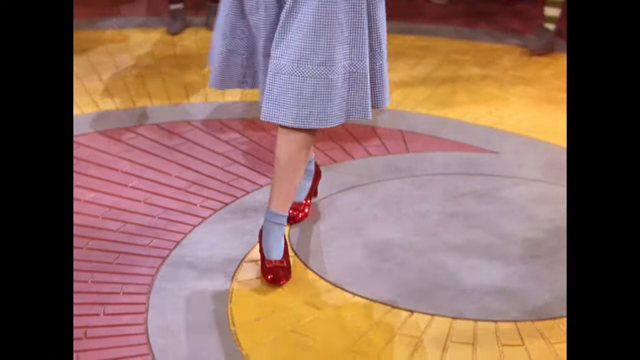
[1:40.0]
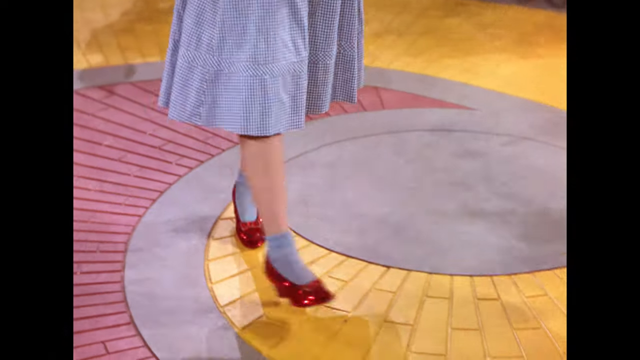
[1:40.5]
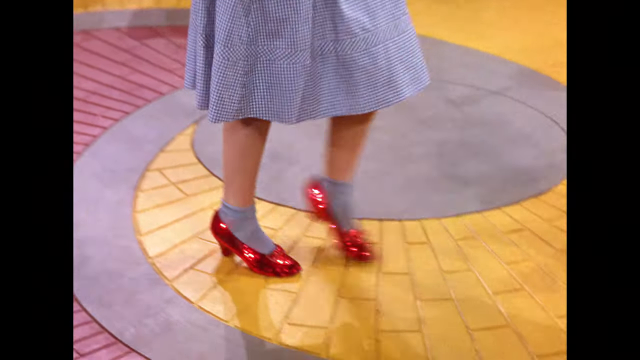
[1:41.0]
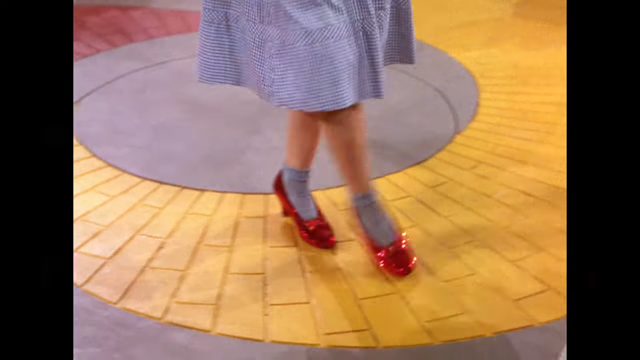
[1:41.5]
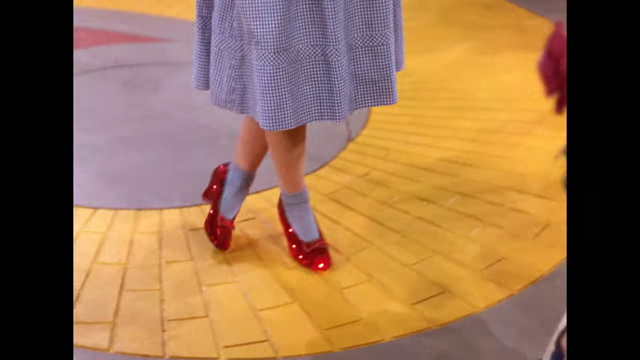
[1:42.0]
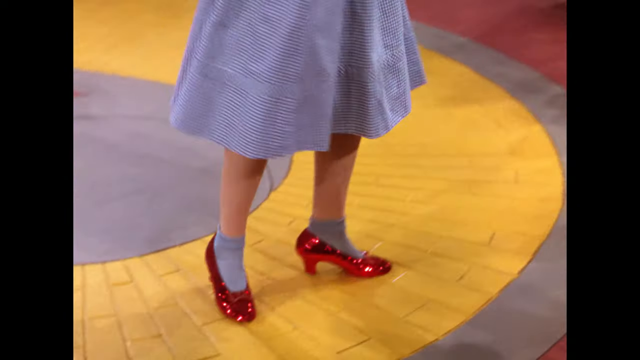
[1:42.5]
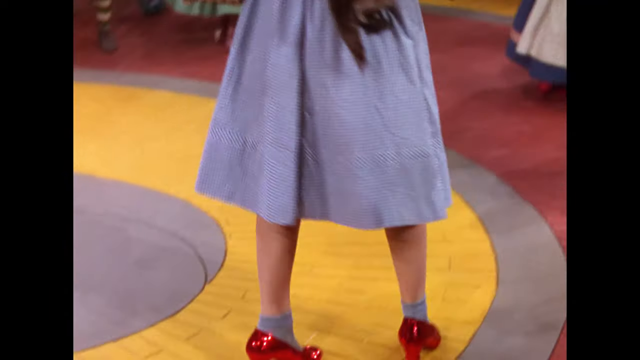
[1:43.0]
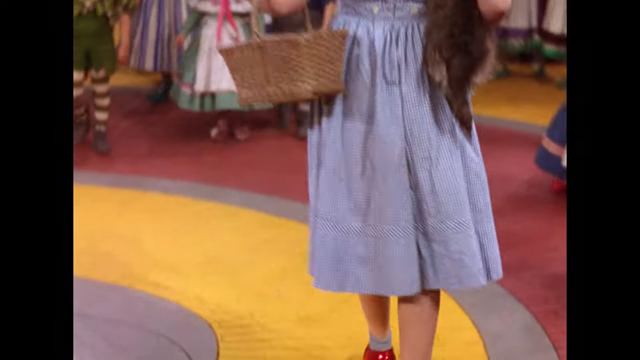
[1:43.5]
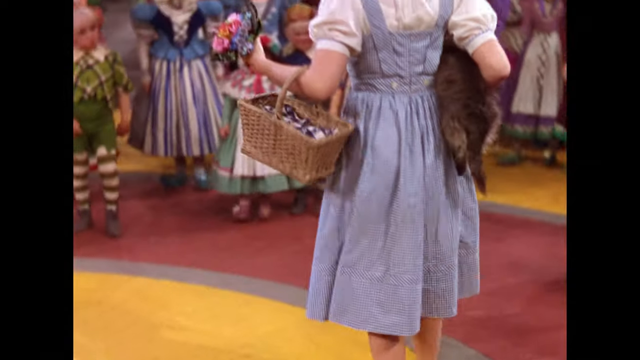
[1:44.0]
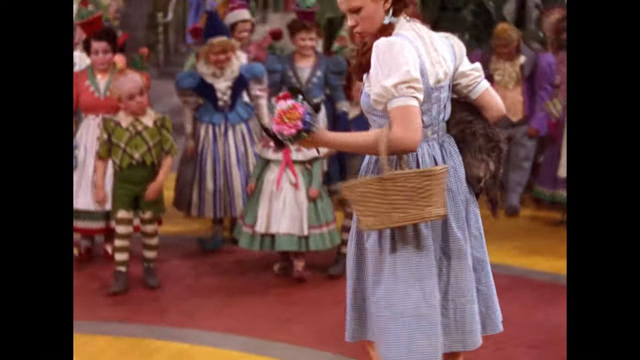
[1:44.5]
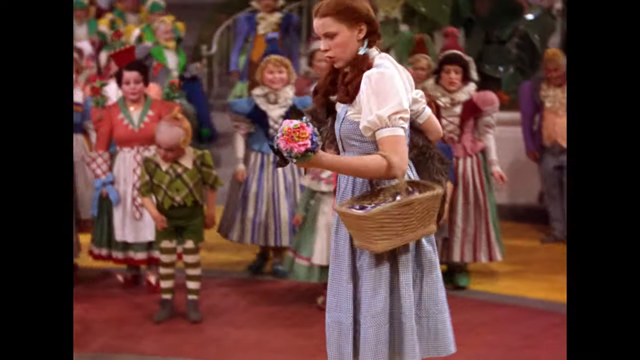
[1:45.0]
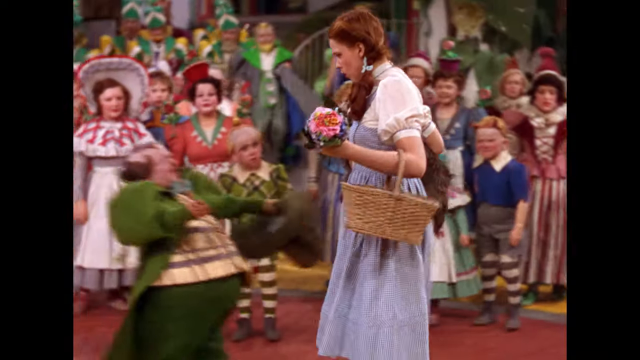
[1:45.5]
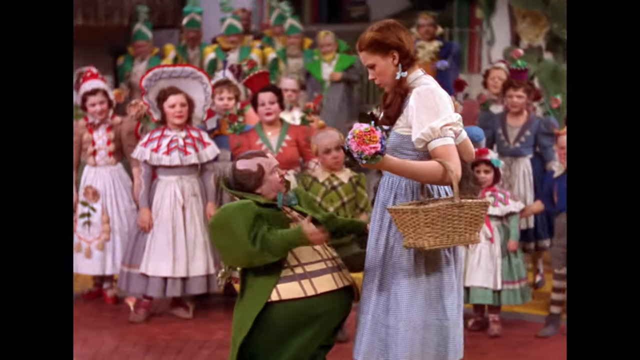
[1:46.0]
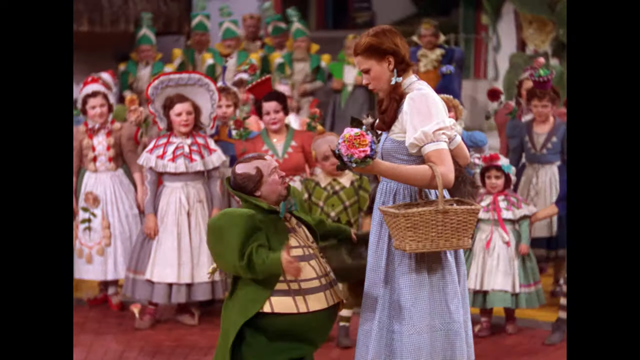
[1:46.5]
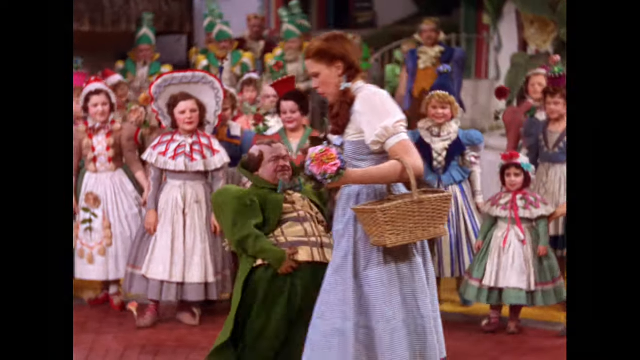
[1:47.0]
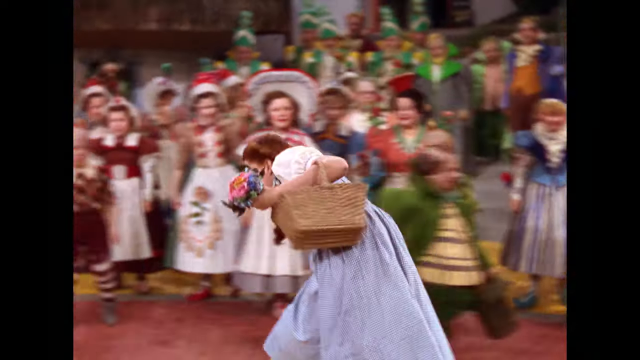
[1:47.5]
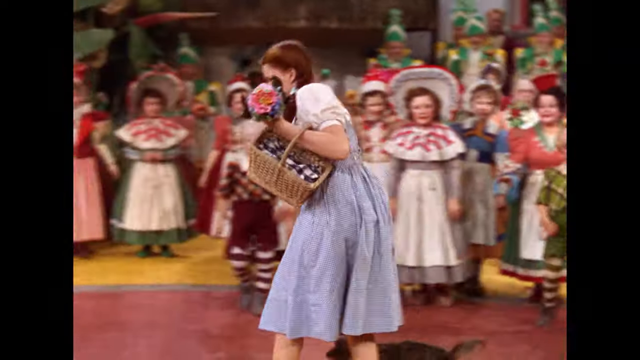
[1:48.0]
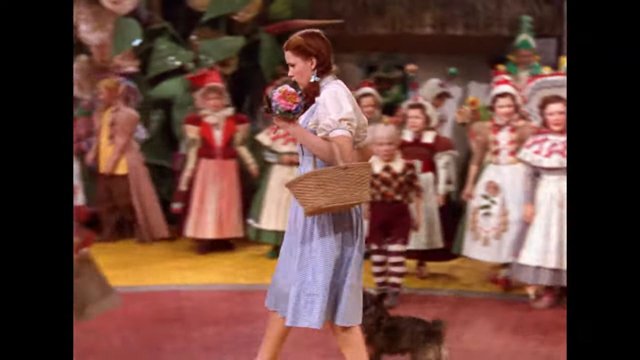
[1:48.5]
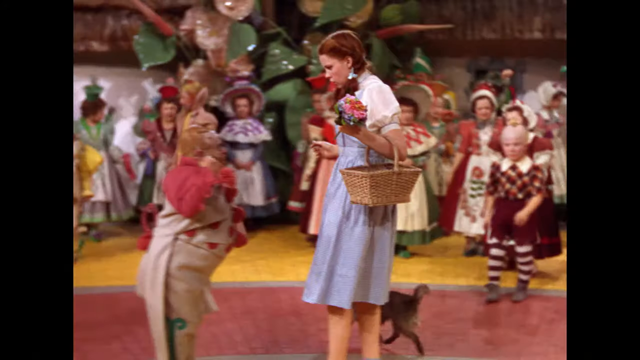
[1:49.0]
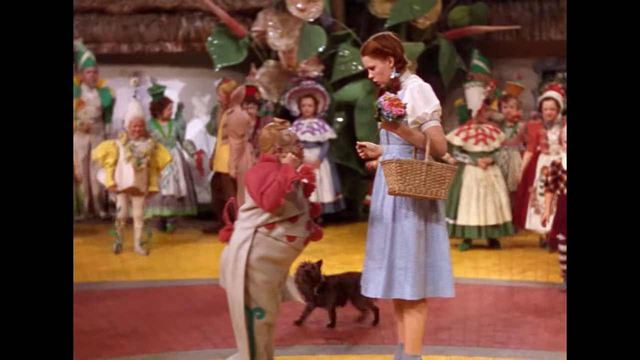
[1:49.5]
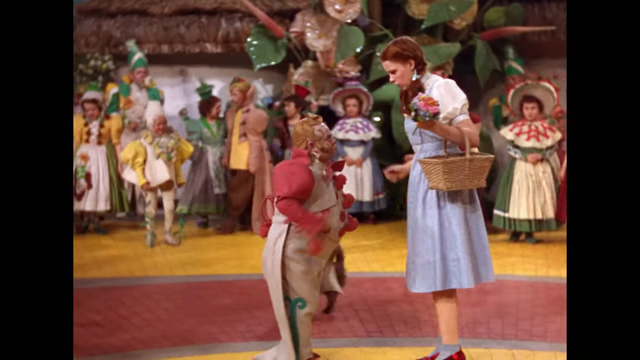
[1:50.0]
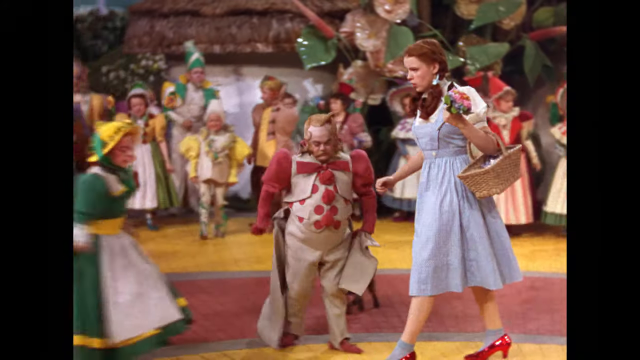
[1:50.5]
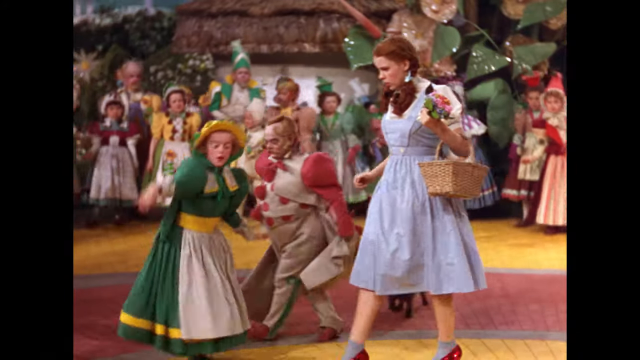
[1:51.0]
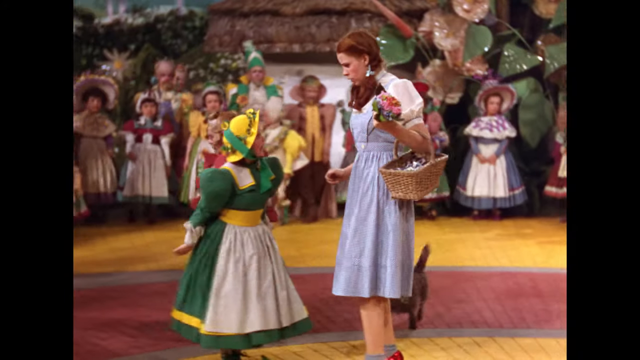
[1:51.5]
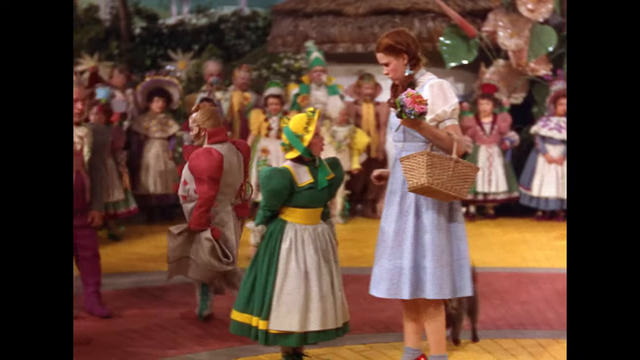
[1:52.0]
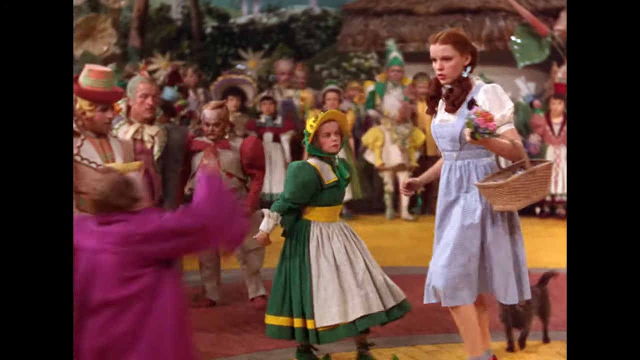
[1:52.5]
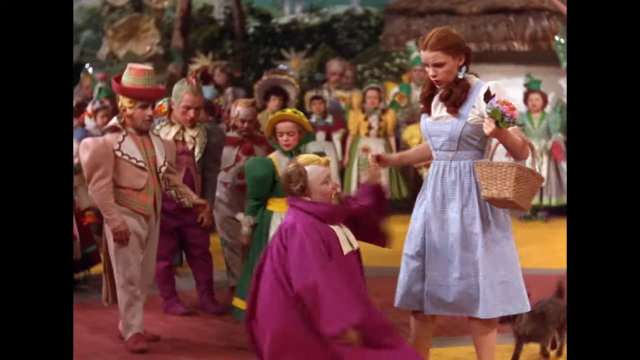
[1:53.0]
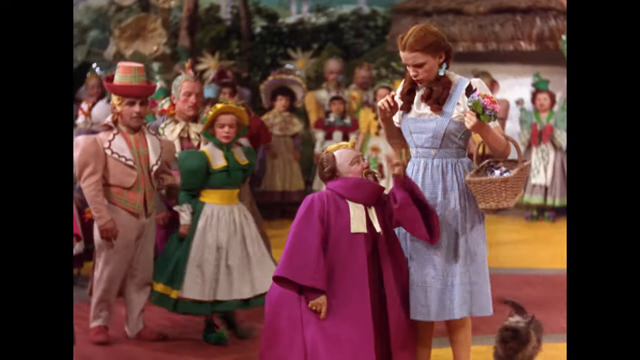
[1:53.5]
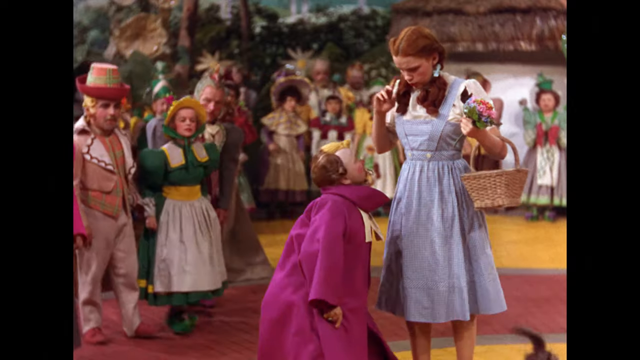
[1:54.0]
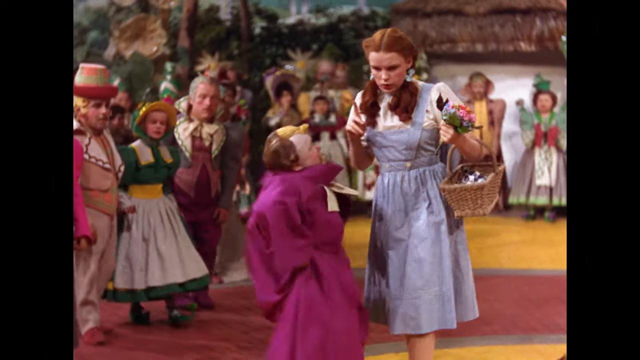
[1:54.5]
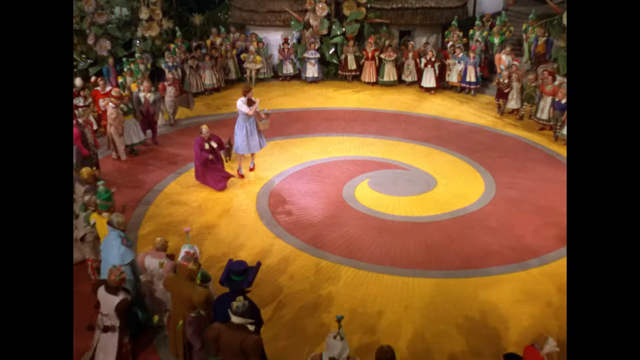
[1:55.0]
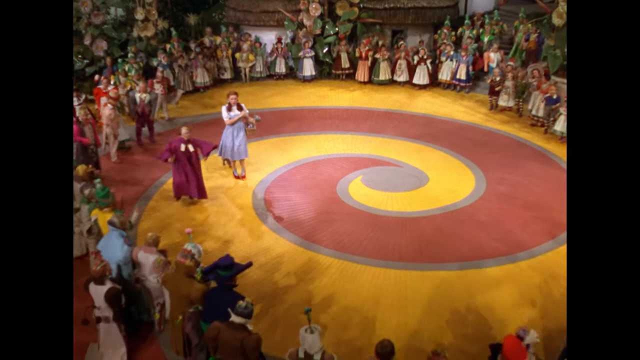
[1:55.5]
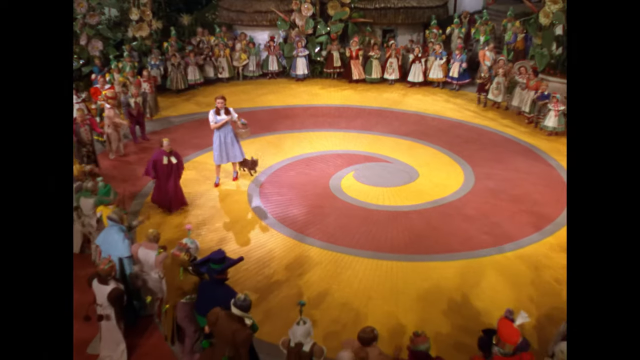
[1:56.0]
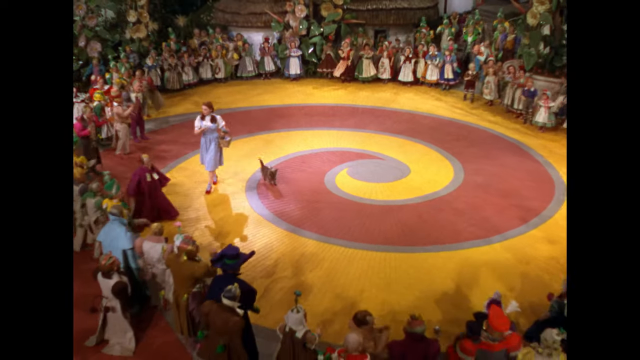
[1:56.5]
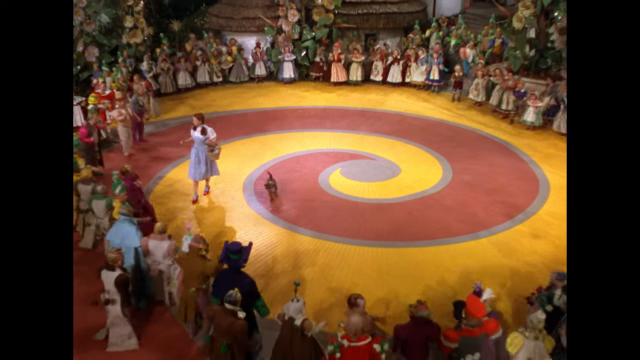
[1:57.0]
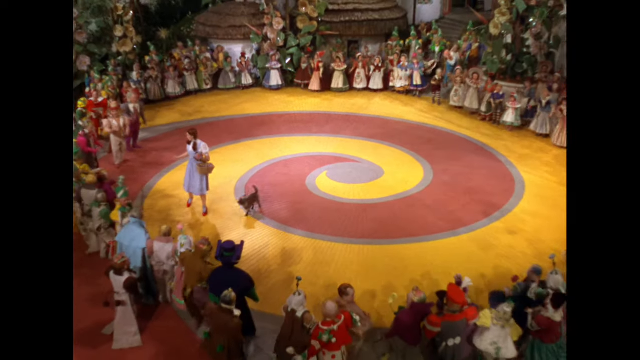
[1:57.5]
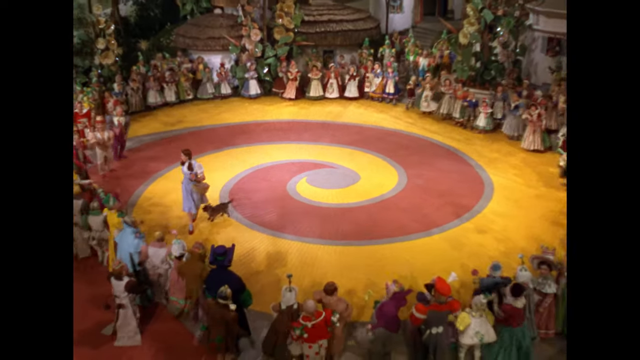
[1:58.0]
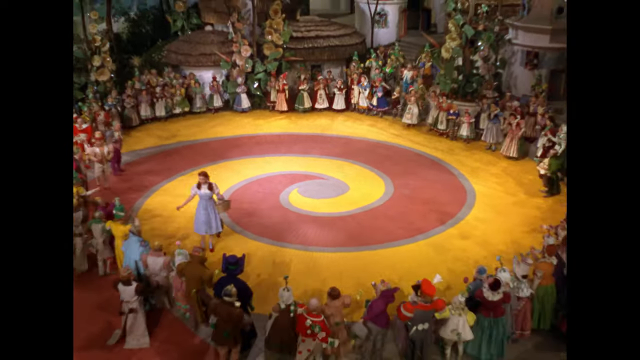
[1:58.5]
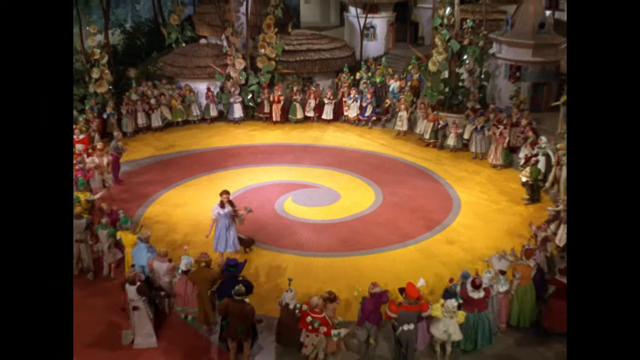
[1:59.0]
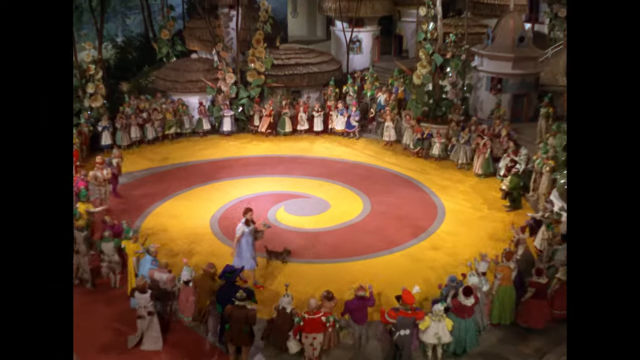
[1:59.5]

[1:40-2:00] The camera points at the ground as Dorothy, in her blue and white checkered dress, shiny red shoes and light purple socks, begins walking on the curved yellow brick road. After a few steps she walks sideways, as if facing the other direction, then turns along the curve; the camera pans up and she looks around a little confused. A small munchkin man with a big belly, wearing green pants and a green jacket, stops her and says something; she looks at him, then puts her dog down so it can walk beside her, and they continue walking. Another munchkin man in a tan vest with red sleeves quickly stops her and says something; she nods and continues, only to be stopped by a woman in a green dress with a white apron on the front and a yellow sun hat. The woman looks up and speaks to Dorothy, who stops and looks concerned, then continues walking. Another man in a bright purple cape stops her and says something, and Dorothy keeps walking. The camera pans out to an aerial view of the whole scene, showing the curved, spiral yellow brick road on the stage surrounded by a large circle of munchkin people, who begin dancing, bouncing up and down and waving their hands. Dorothy keeps following the yellow brick road, turning her head left and right to see everything going on around her.